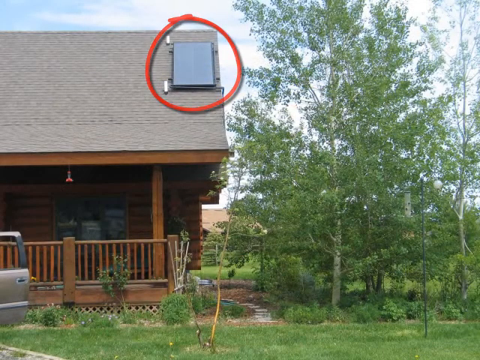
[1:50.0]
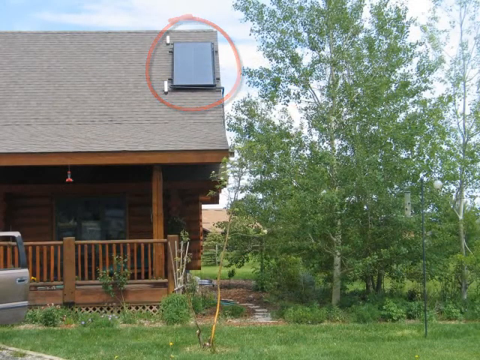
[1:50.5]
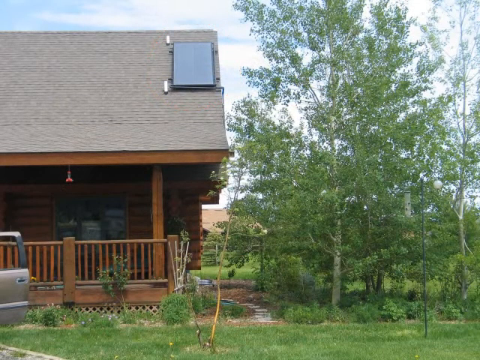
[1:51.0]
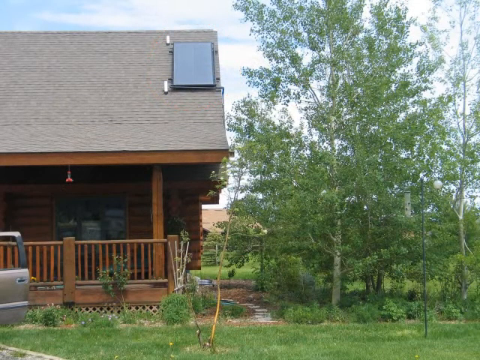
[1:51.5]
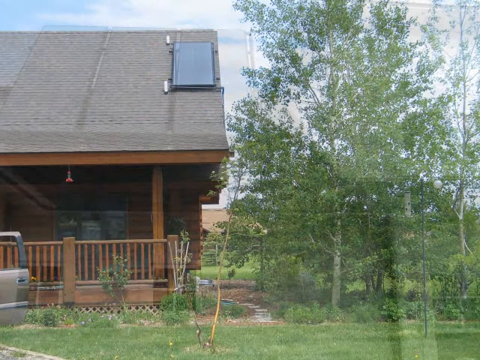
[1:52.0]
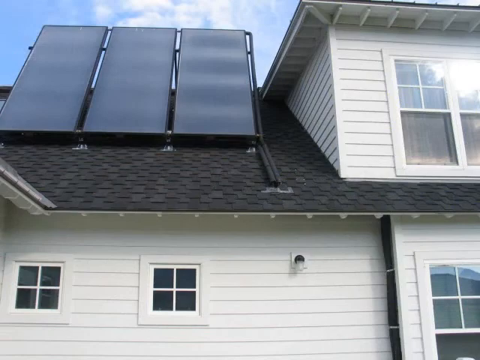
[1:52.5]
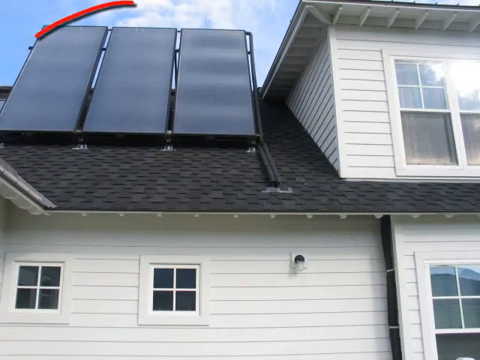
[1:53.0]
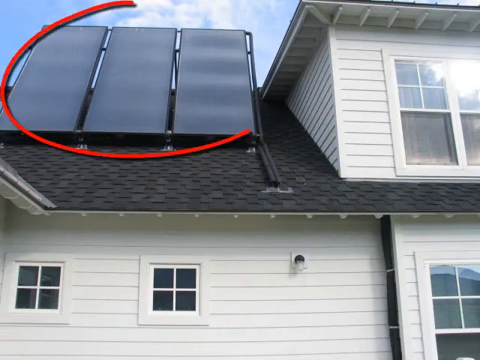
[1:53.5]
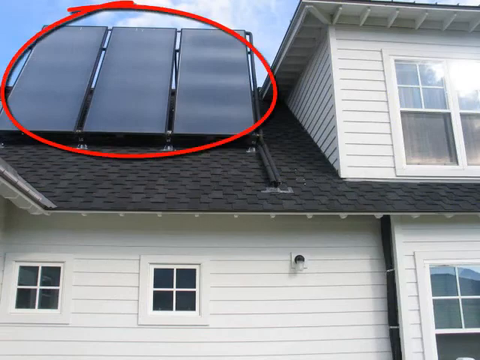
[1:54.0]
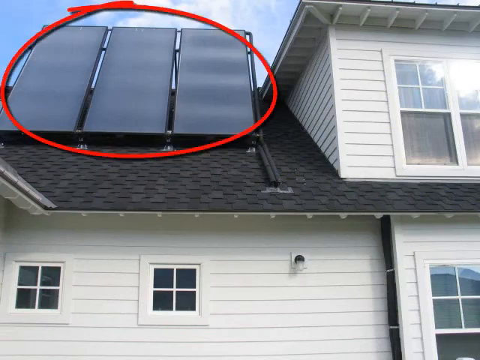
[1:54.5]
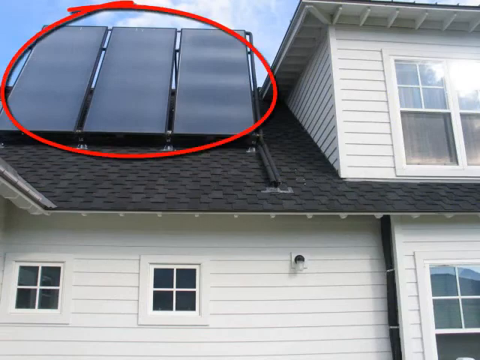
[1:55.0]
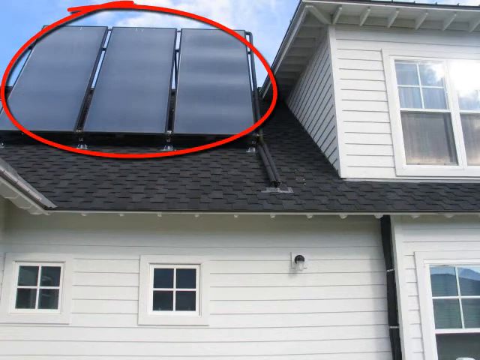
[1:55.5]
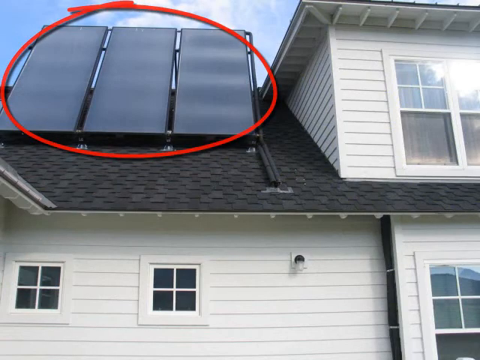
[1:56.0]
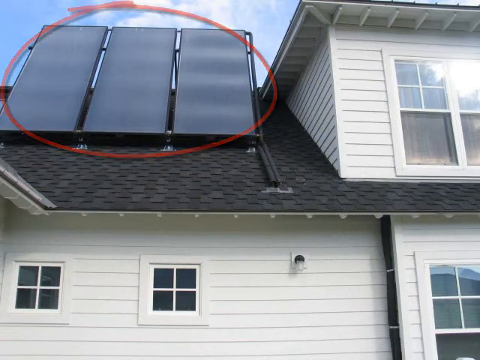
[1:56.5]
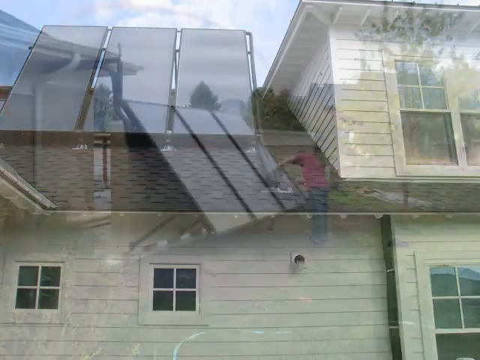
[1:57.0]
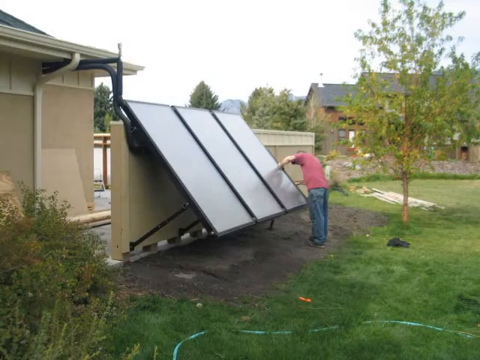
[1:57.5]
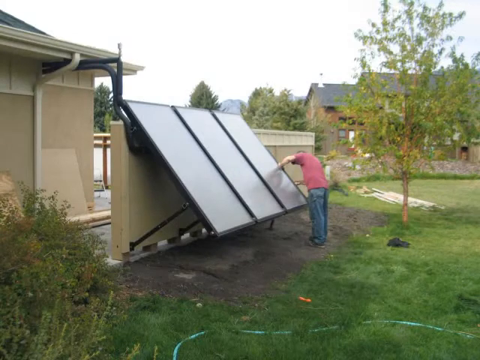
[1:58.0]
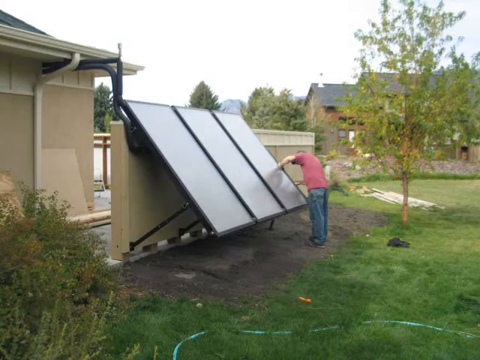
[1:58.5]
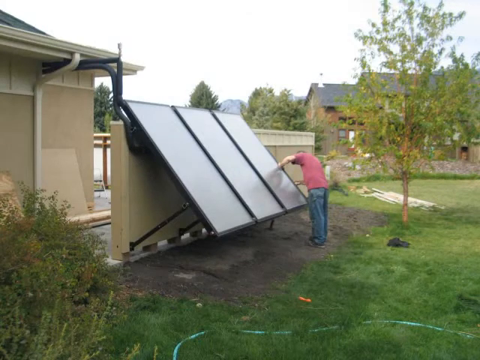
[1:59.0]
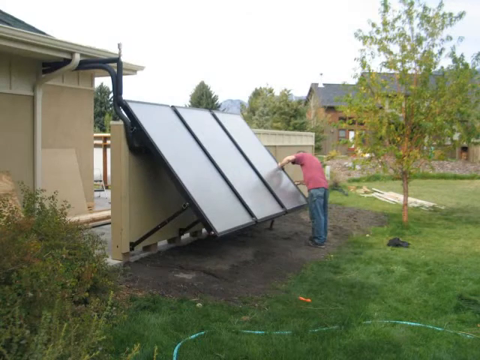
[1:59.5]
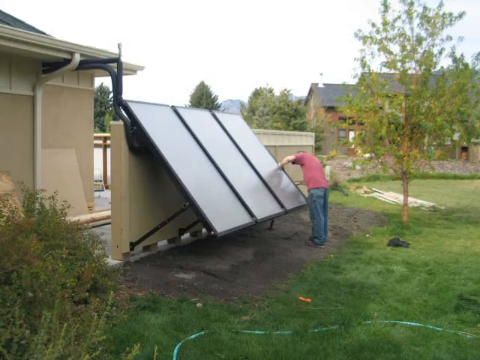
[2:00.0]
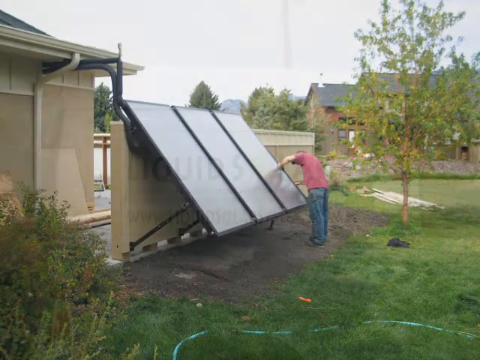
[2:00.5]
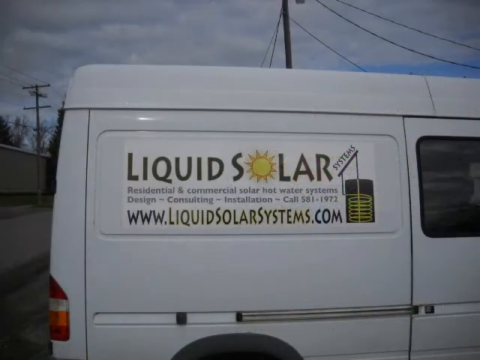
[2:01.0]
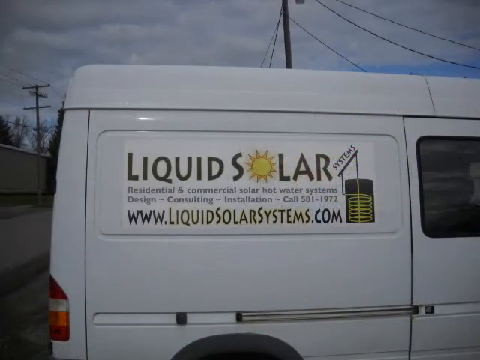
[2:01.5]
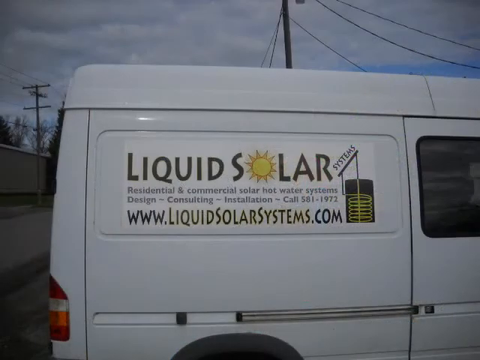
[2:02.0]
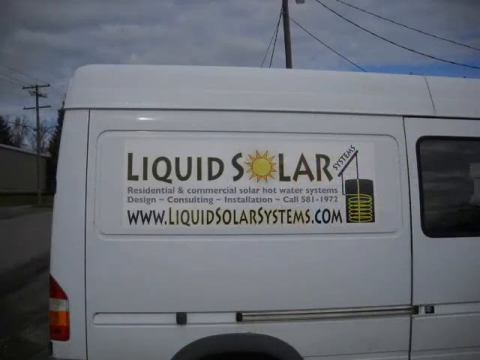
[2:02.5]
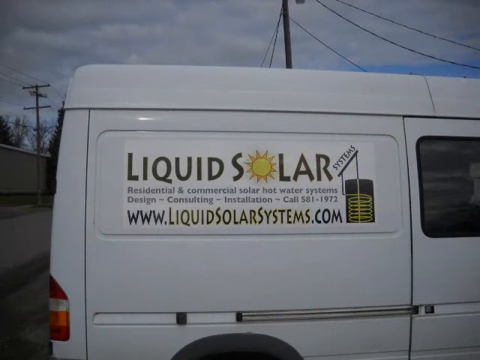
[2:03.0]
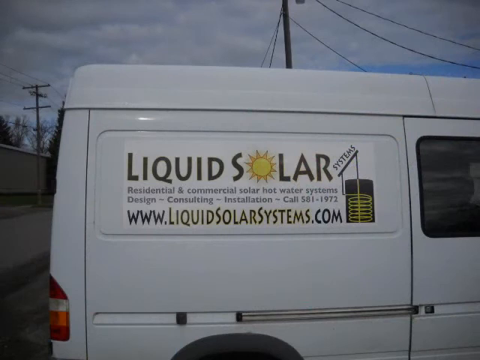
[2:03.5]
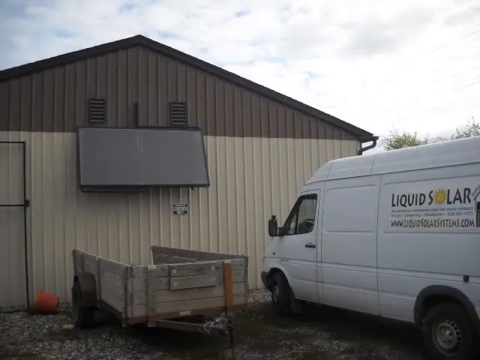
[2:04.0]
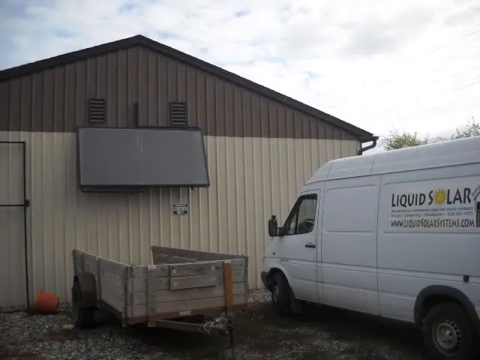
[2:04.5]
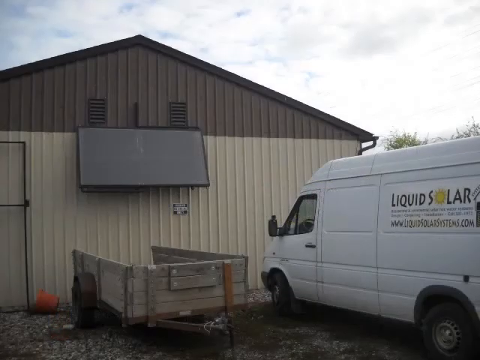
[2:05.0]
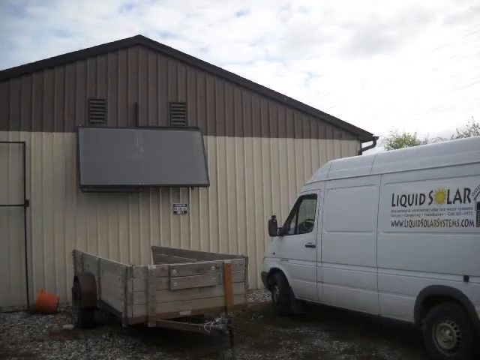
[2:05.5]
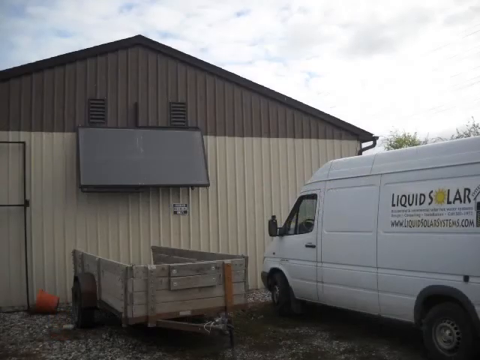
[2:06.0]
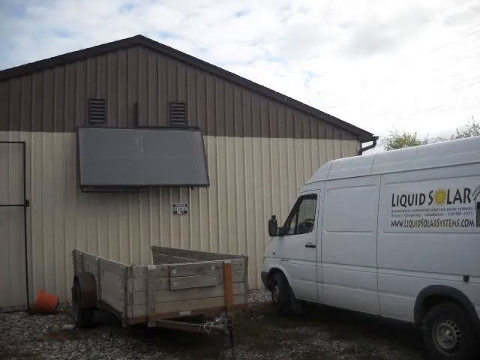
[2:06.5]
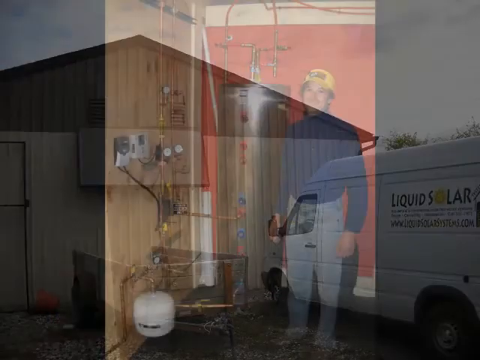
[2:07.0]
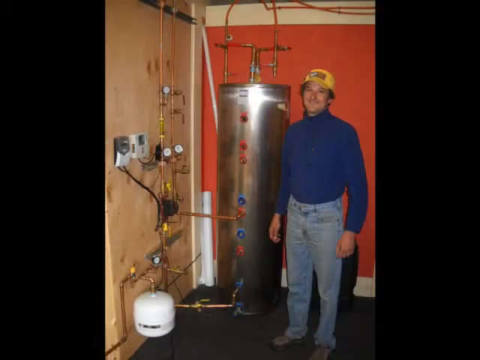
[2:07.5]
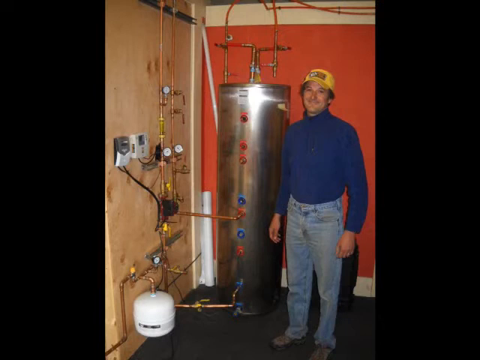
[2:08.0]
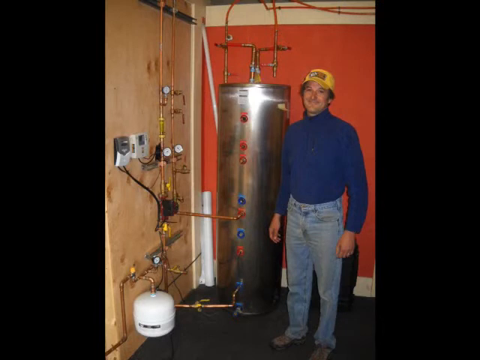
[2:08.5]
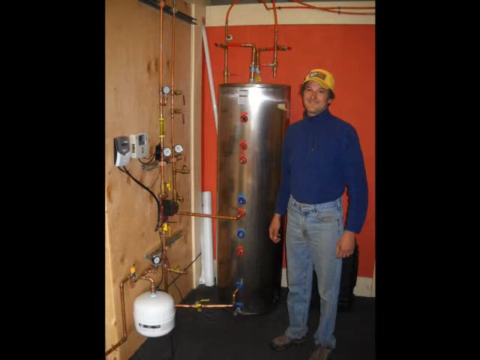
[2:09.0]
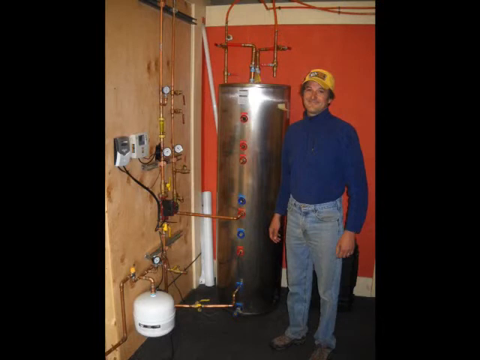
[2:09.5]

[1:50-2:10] A white house has three larger panels on the roof, which are circled in red. The next image shows what looks like a wall outside a house, seemingly with three panels attached to it at person height, and a man standing by them as if adjusting something. The next photograph is of a white van; on the side it reads "liquid solar system, residential and commercial solar hot water systems, design, consulting, insulation", followed by a telephone number and website. The van is then shown parked outside what is possibly some kind of warehouse, seemingly made of corrugated metal in two different shades of brown, with a panel attached to the wall and some kind of wooden trailer. The next image shows a man, presumably a workman, standing next to one of the heating tanks, with lots of blue and red pipes coming from it. He wears a blue polo-neck sweater, a yellow cap and blue jeans and smiles at the camera.